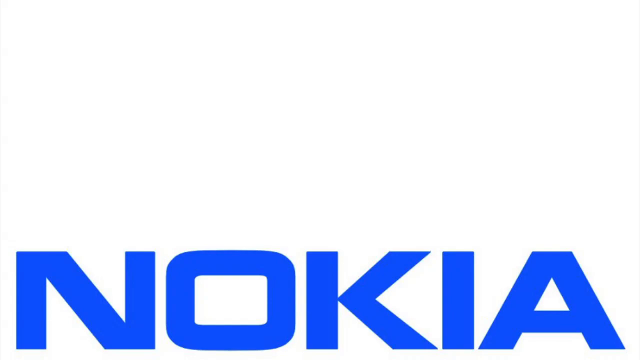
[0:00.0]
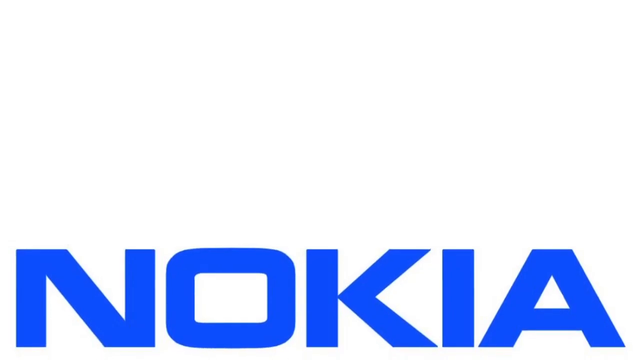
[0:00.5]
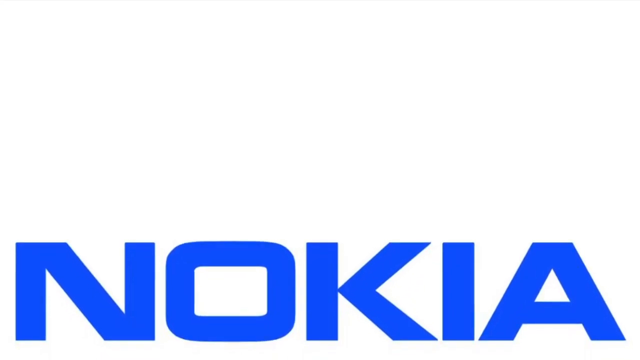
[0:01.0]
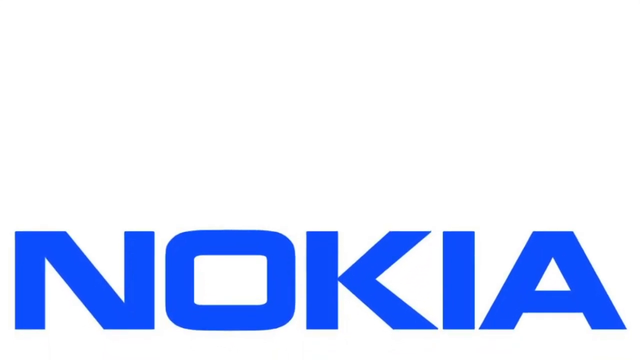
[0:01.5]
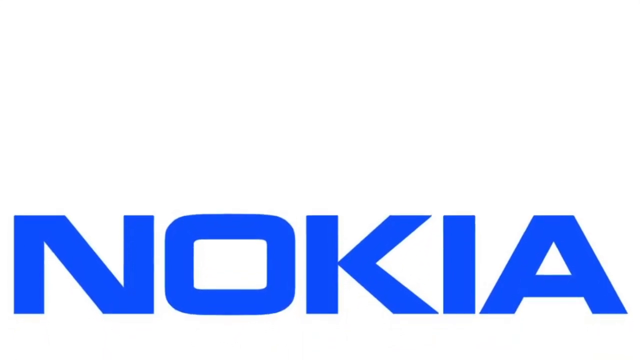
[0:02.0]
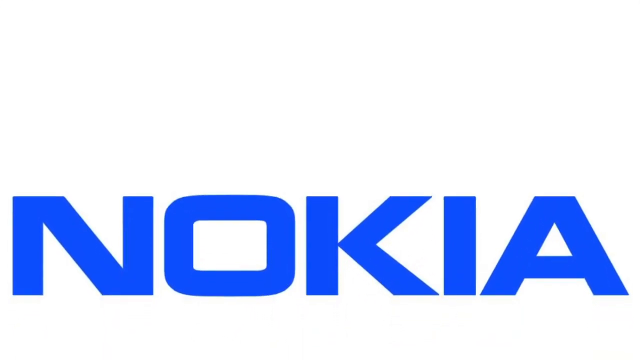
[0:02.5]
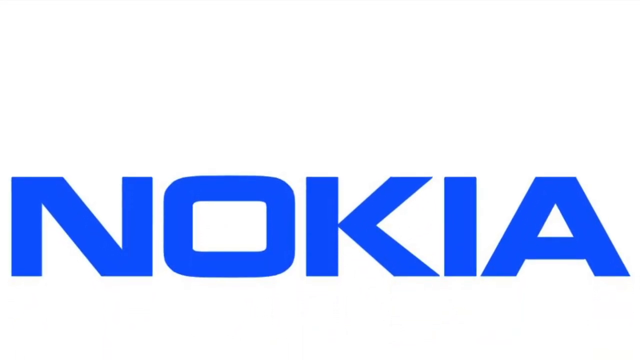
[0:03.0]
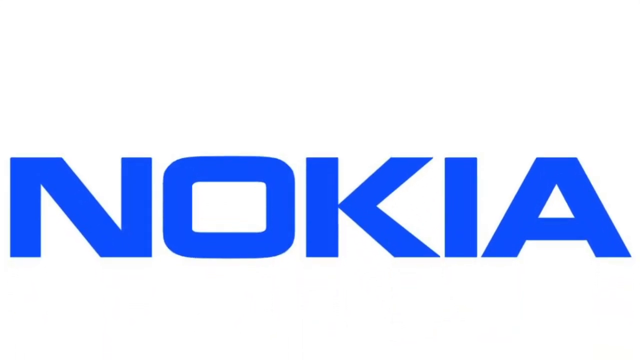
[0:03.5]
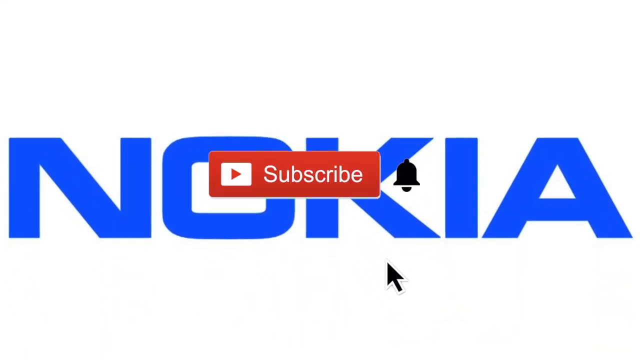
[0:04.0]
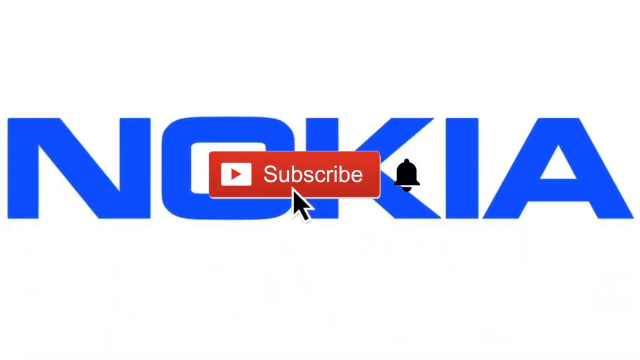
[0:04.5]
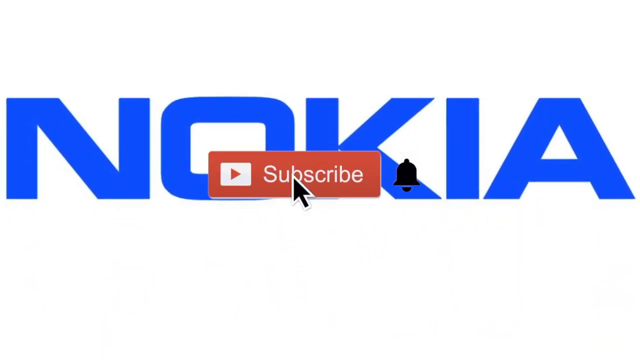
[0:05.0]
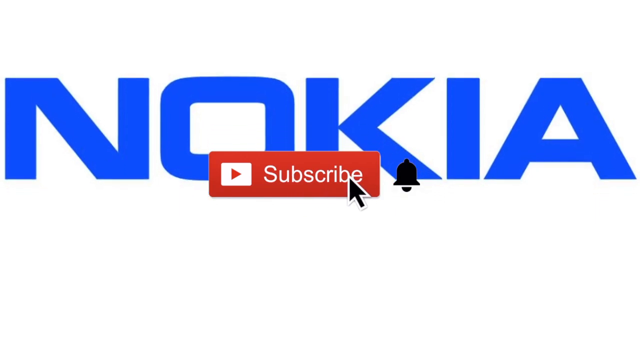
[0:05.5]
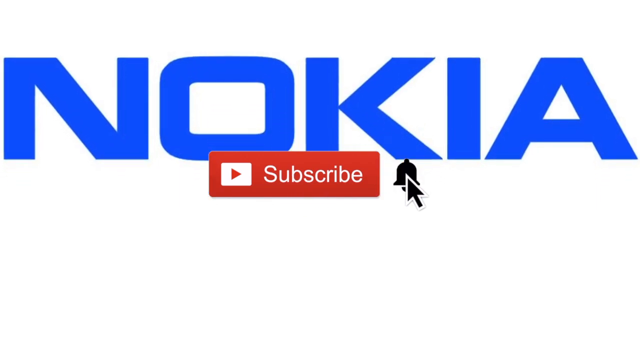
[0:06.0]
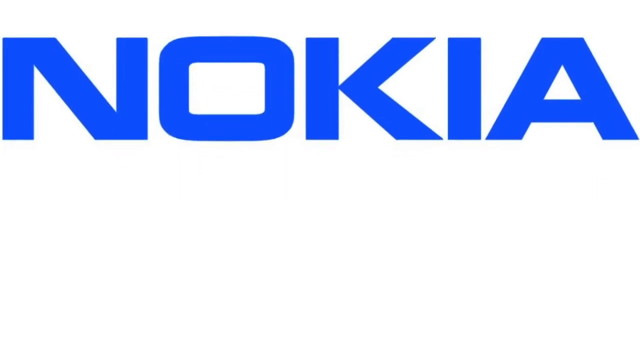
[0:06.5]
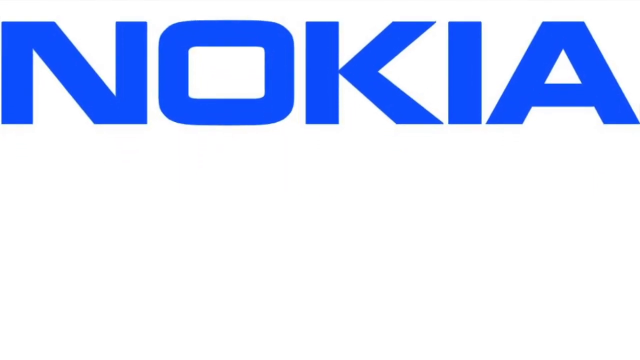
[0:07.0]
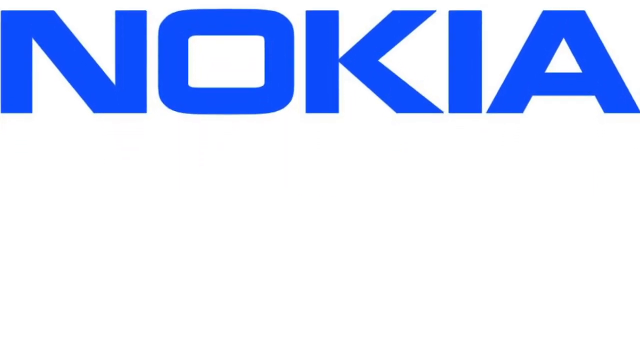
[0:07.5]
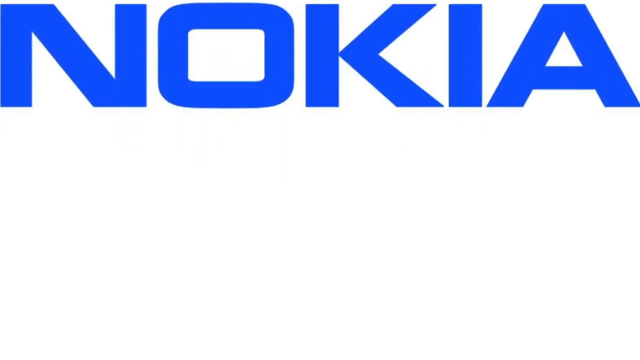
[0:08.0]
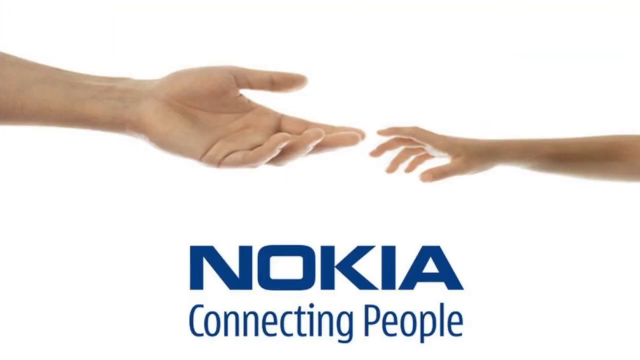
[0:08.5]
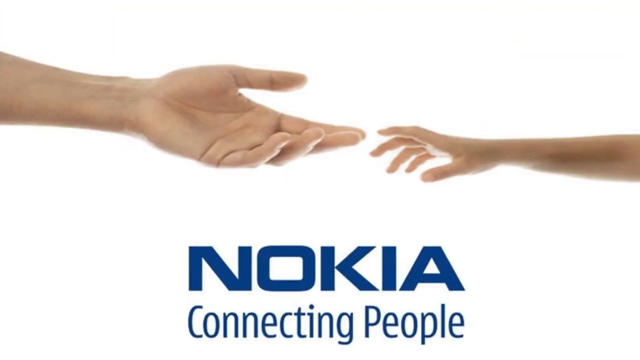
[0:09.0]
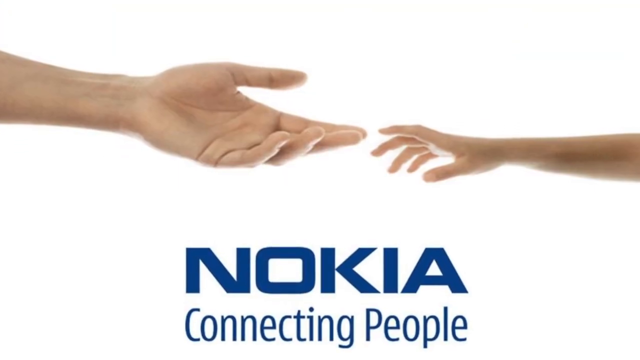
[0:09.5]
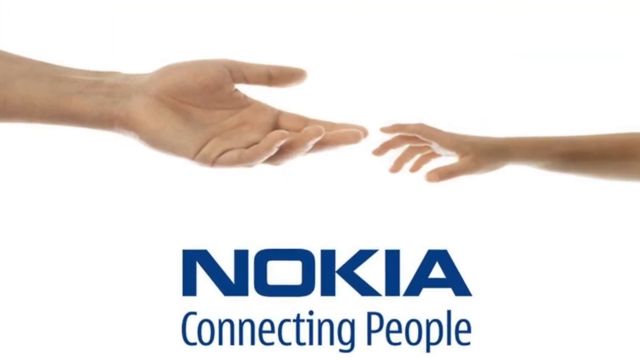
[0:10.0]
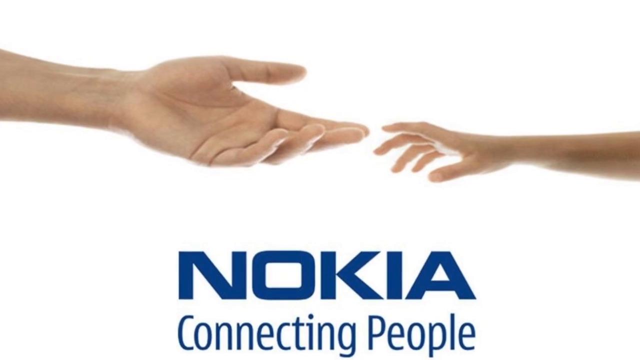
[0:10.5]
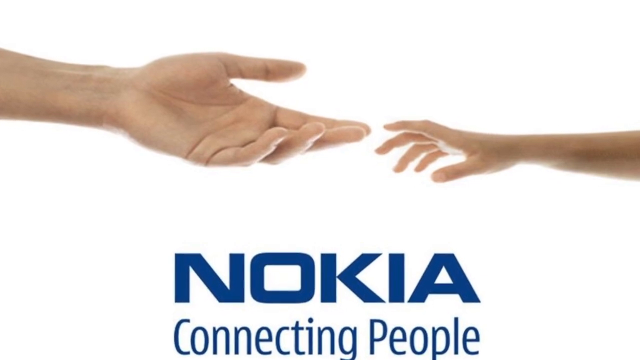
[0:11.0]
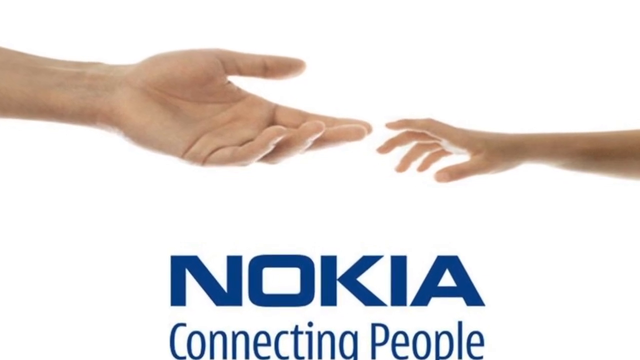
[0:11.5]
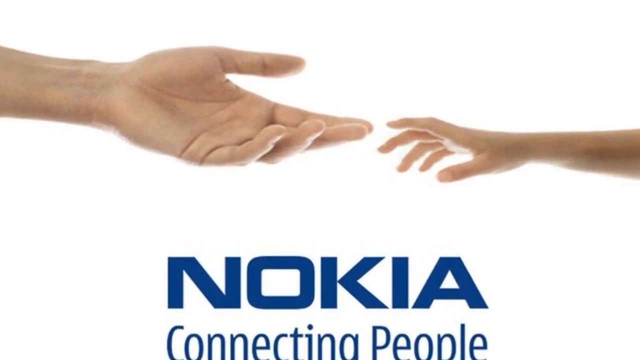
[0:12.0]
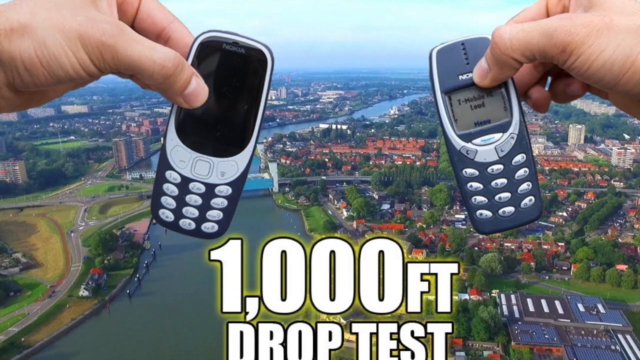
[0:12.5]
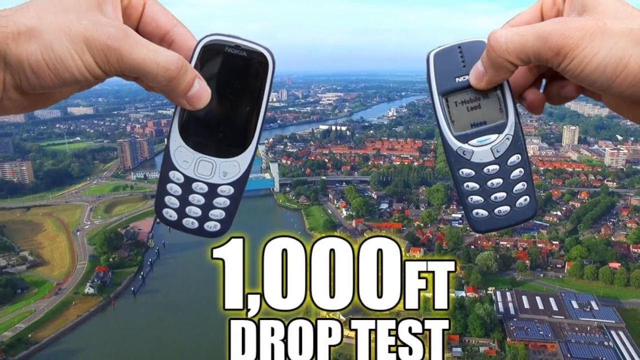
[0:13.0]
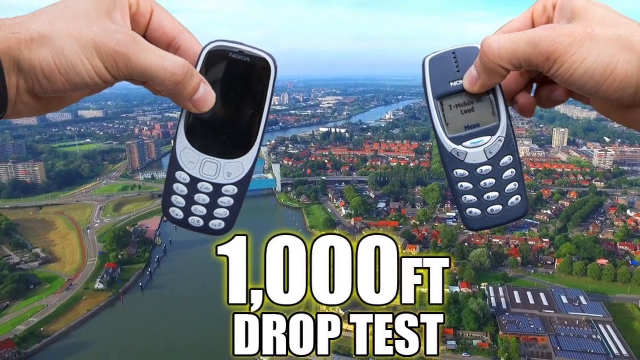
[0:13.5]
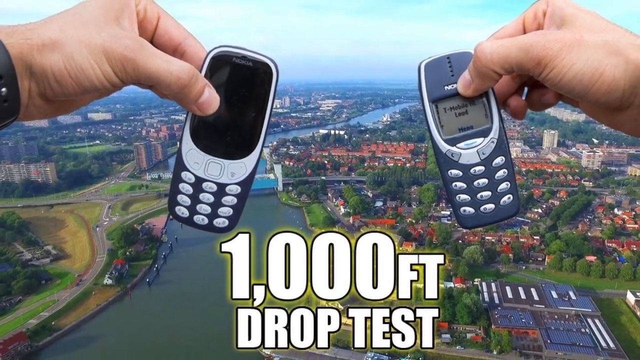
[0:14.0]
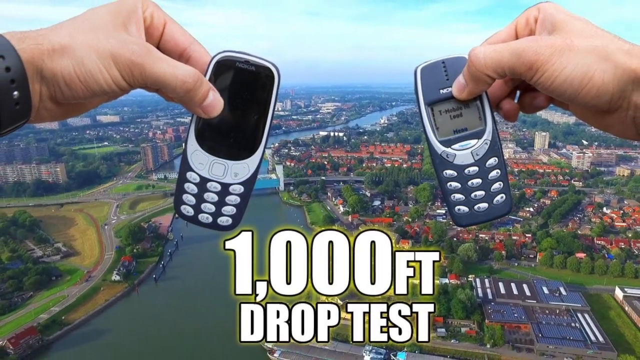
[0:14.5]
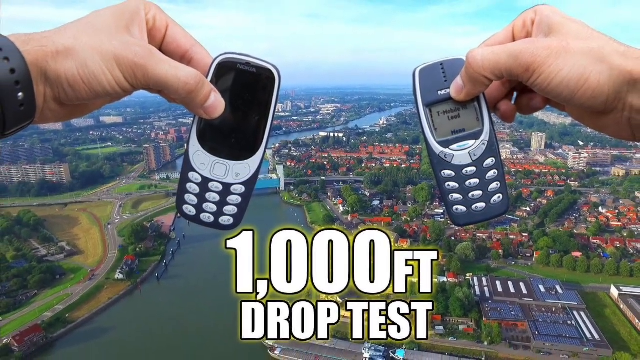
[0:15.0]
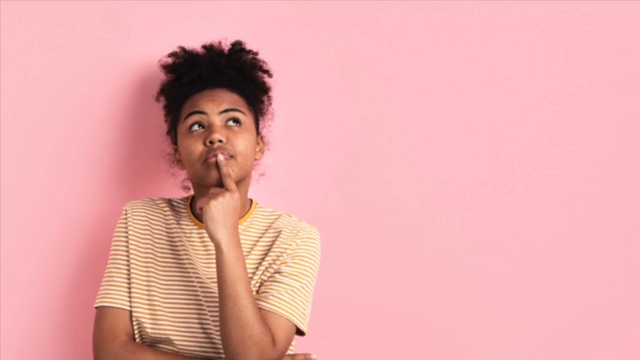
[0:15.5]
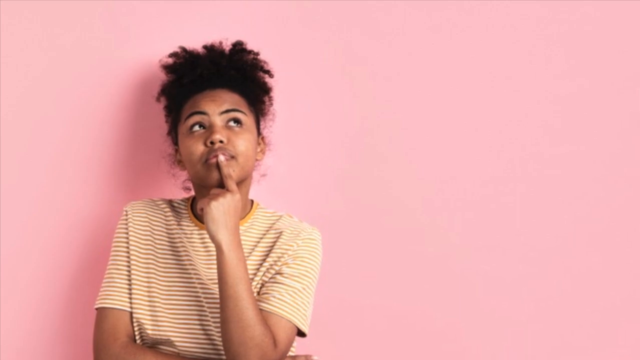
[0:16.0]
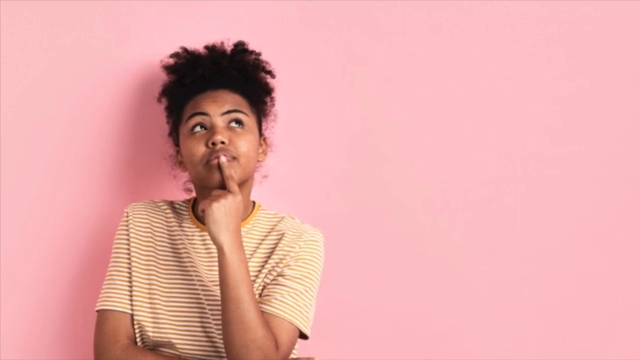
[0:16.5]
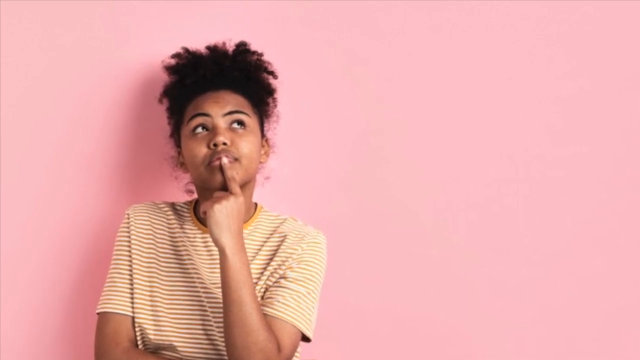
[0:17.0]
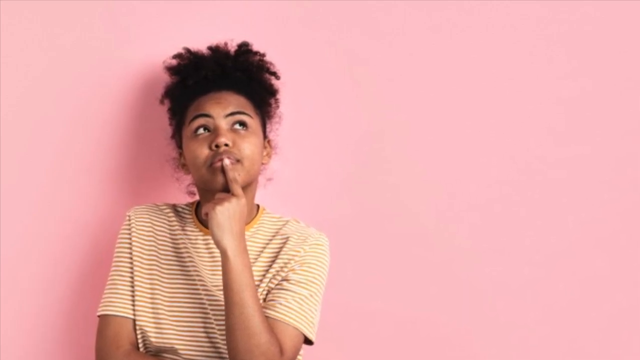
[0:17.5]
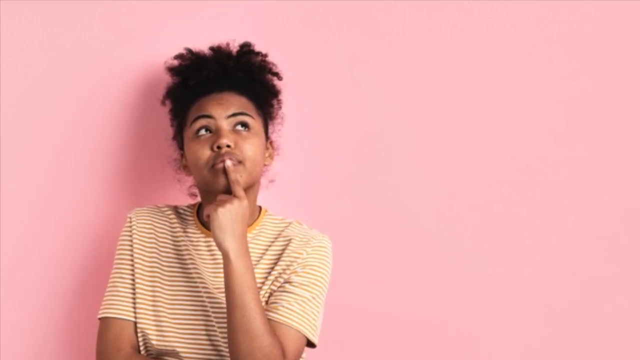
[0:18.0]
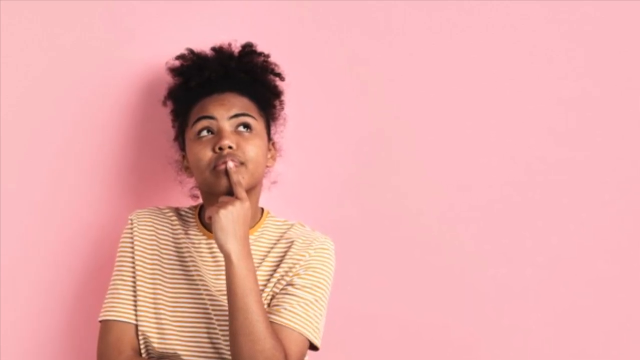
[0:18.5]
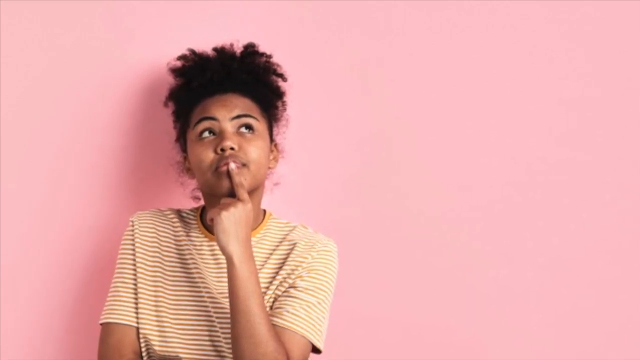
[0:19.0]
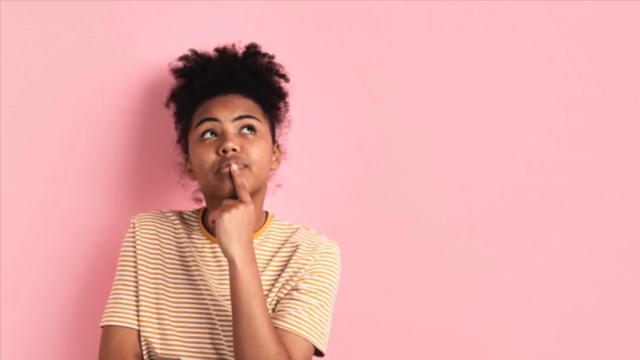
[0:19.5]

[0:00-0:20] The word "Nokia" appears in blue, starting at the bottom of the screen and moving to the top. As this happens, a red and white rectangle with a YouTube look appears, with a play button on its left side and the word "subscribe". A black mouse cursor moves over to "subscribe" and clicks the button, and then clicks a bell on the right side of the button as well. By this point the Nokia sign has reached the very top of the screen, where it slows down and stops. Next comes an image of two hands: a very large hand on the left side of the screen and a much smaller hand on the right side. The small hand looks like a left hand and the hand on the right side looks like a right hand, and both reach out toward each other. The background is completely white and very bright, and the text at the bottom reads "Nokia connecting people". The camera zooms in on this image. The scene then changes to a left hand holding a cell phone on the left side of the screen and a right hand holding a cell phone on the right side, with an overhead view of a city in the backdrop and the words "1000 foot drop test" at the bottom. Next, a young Black woman, probably about 19 years old, wearing a striped shirt, sits in front of a pink wall with her left hand up and her left finger on her lips, looking up at the sky.